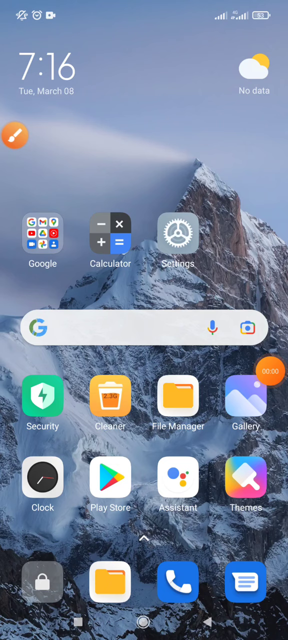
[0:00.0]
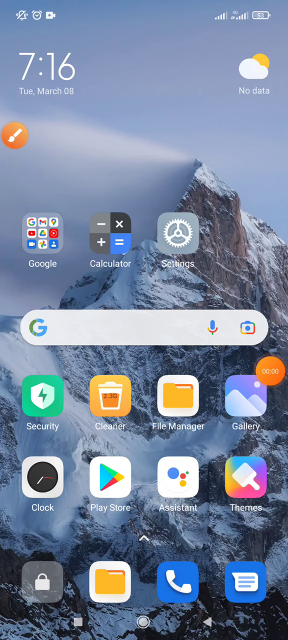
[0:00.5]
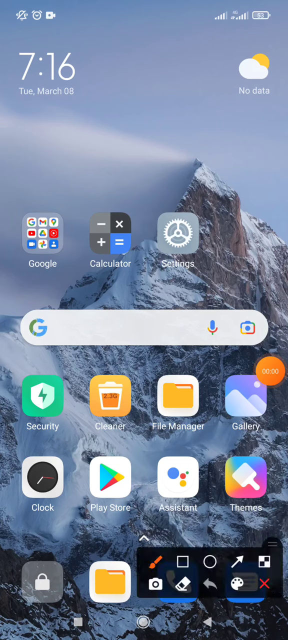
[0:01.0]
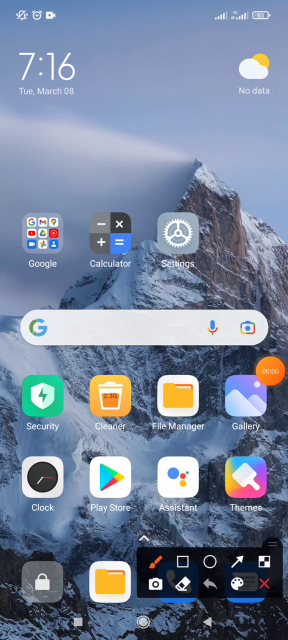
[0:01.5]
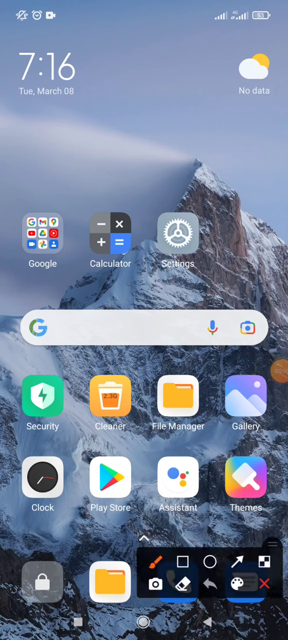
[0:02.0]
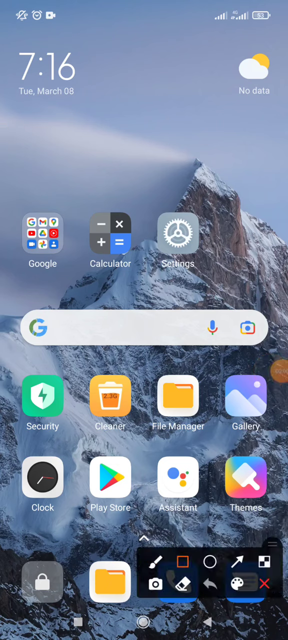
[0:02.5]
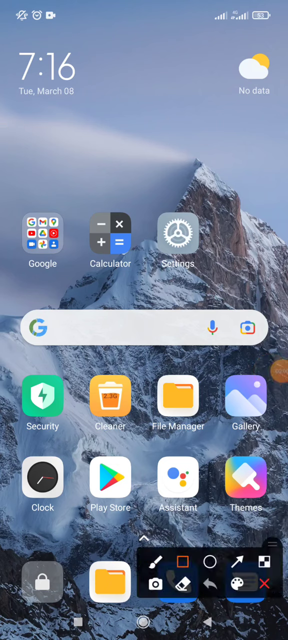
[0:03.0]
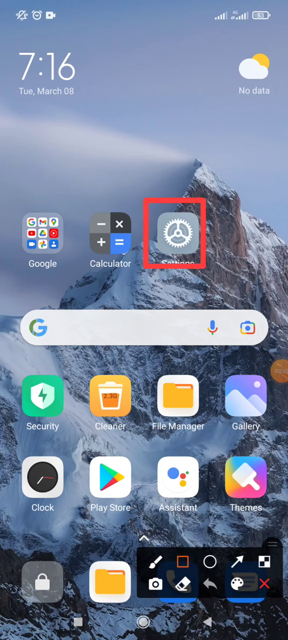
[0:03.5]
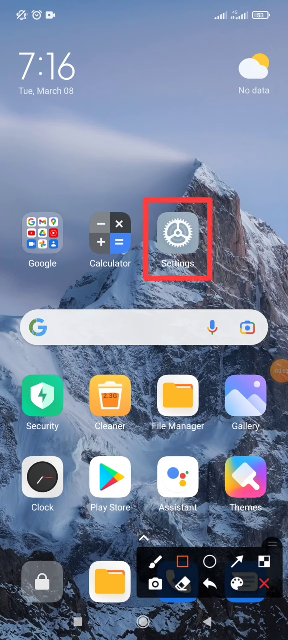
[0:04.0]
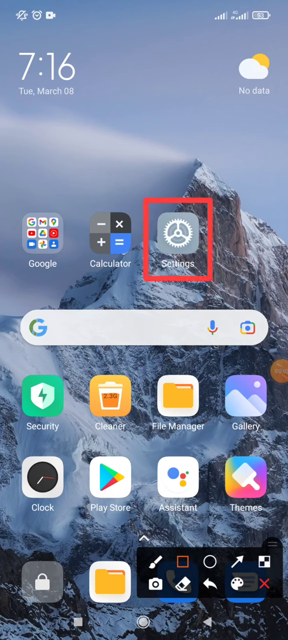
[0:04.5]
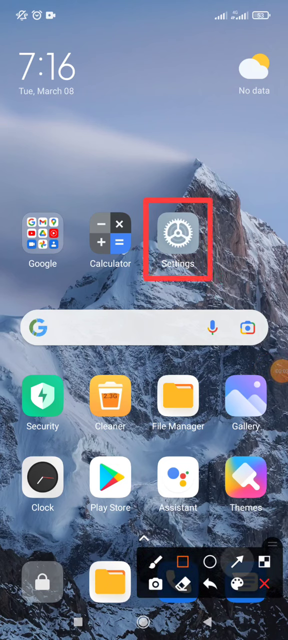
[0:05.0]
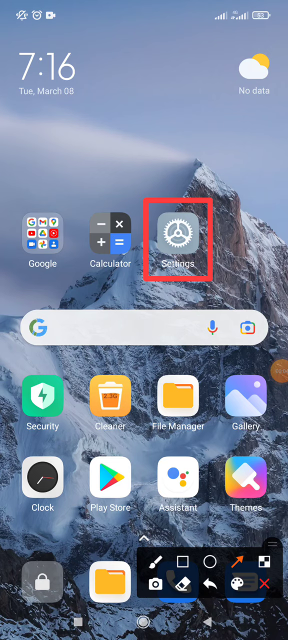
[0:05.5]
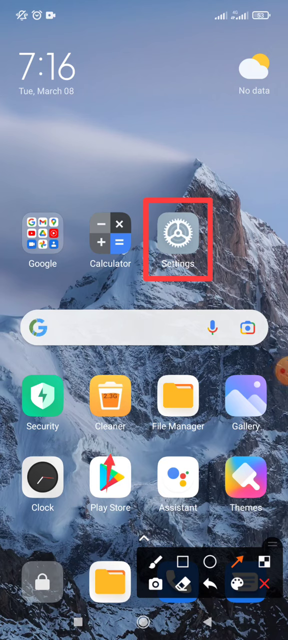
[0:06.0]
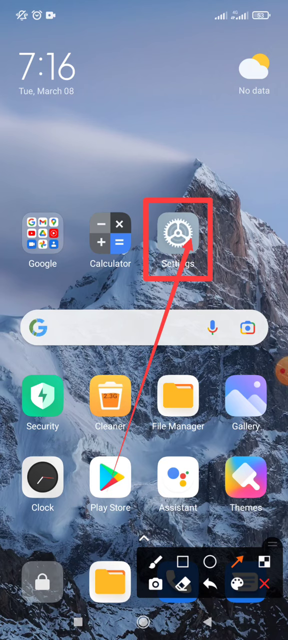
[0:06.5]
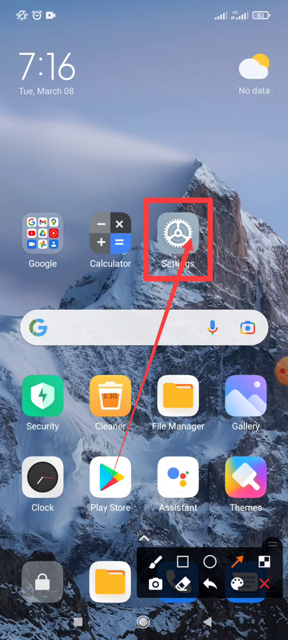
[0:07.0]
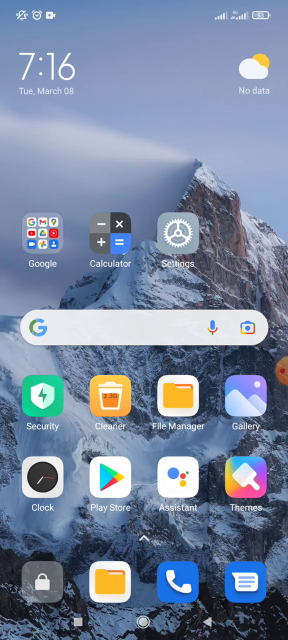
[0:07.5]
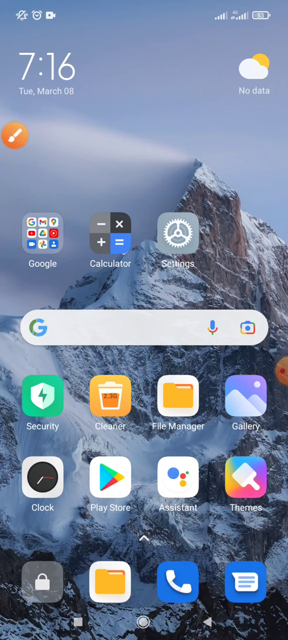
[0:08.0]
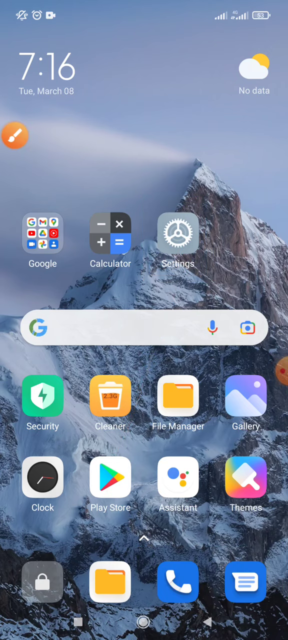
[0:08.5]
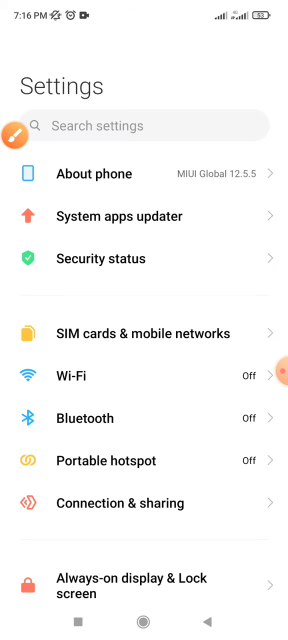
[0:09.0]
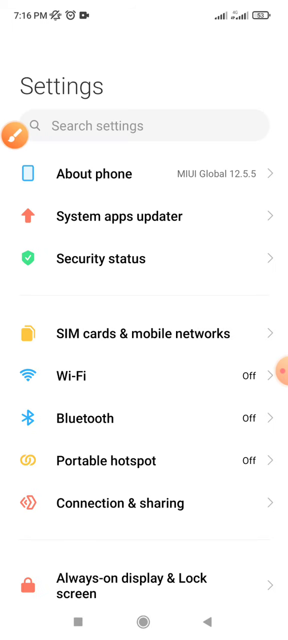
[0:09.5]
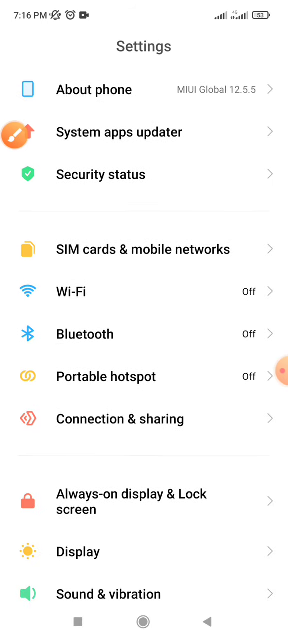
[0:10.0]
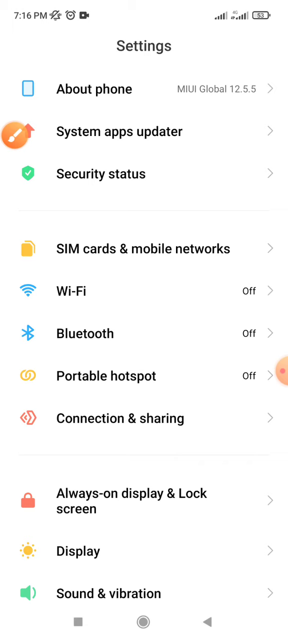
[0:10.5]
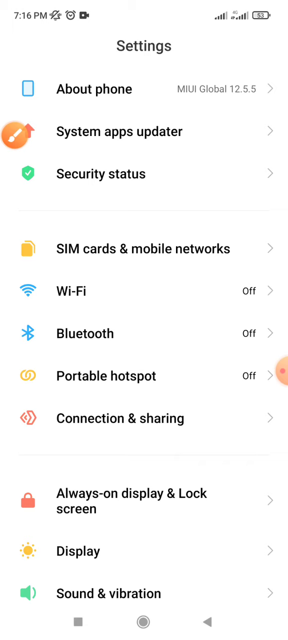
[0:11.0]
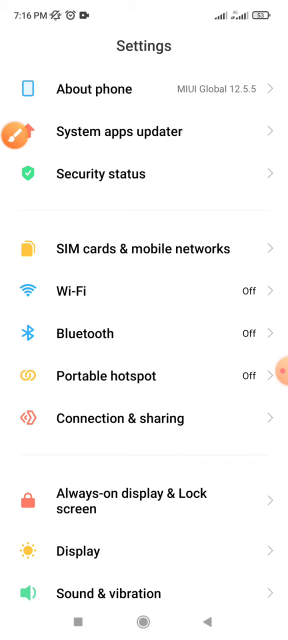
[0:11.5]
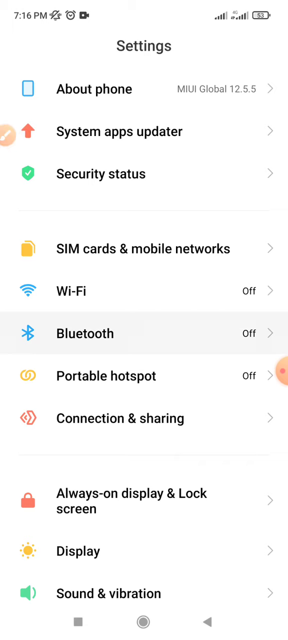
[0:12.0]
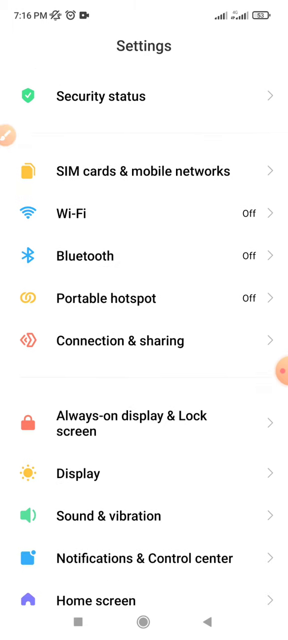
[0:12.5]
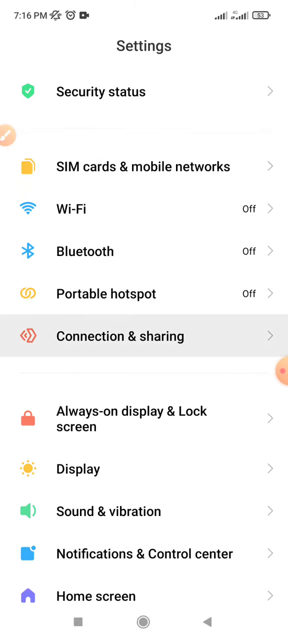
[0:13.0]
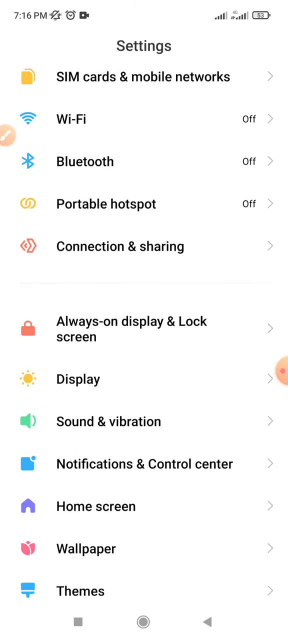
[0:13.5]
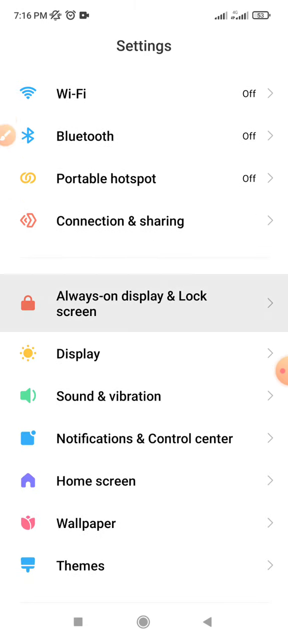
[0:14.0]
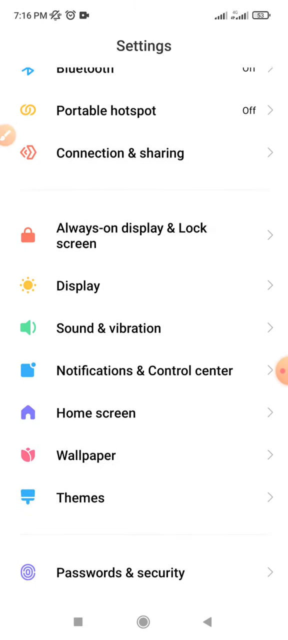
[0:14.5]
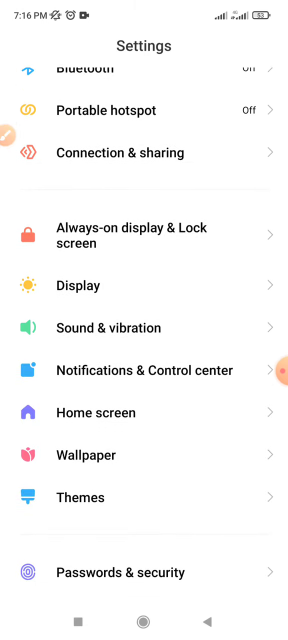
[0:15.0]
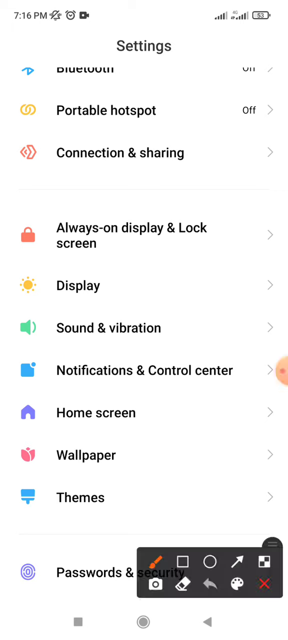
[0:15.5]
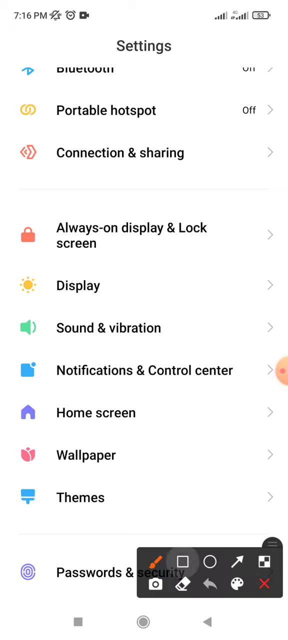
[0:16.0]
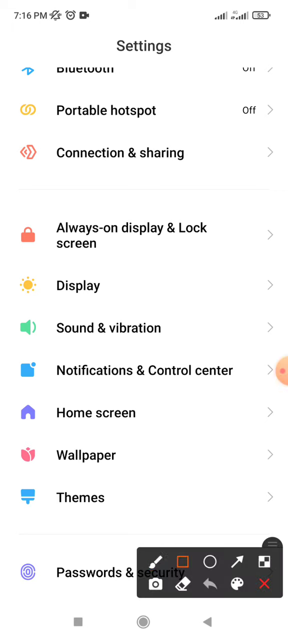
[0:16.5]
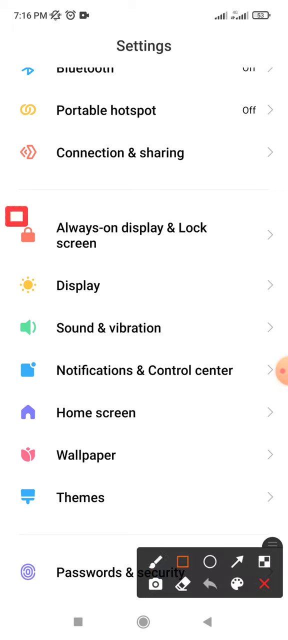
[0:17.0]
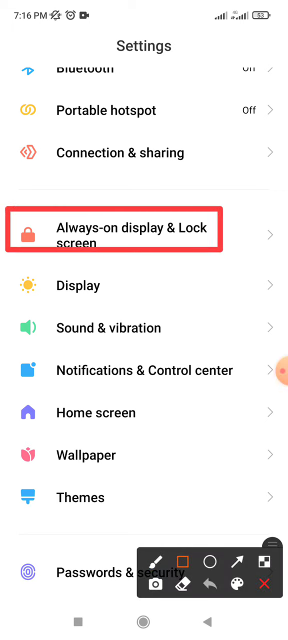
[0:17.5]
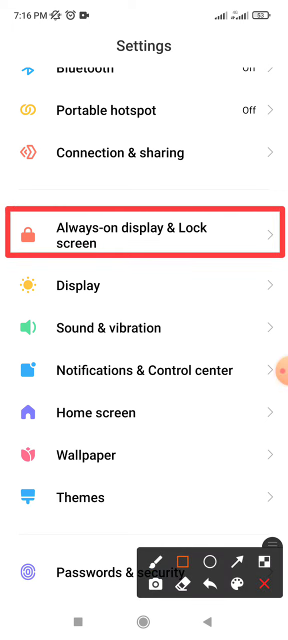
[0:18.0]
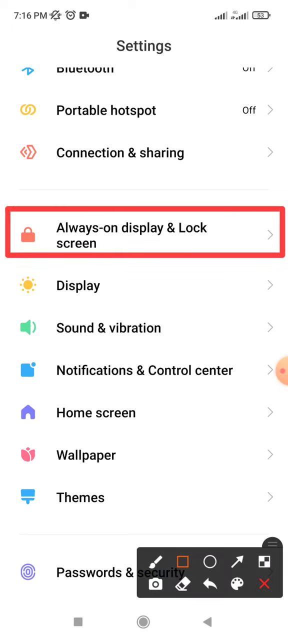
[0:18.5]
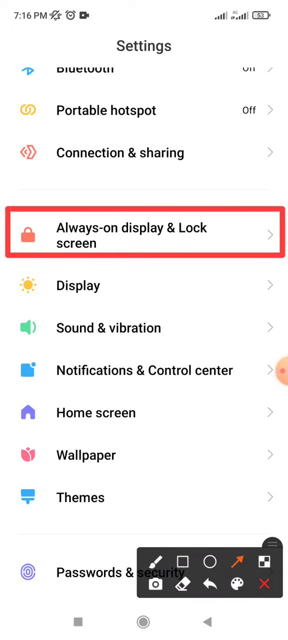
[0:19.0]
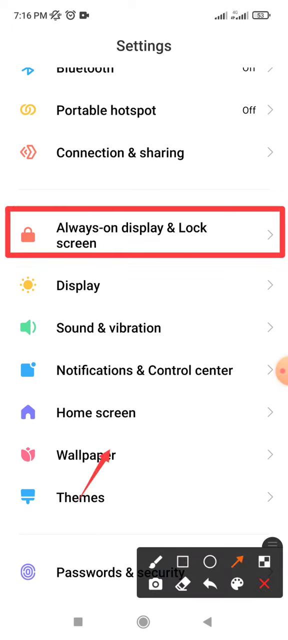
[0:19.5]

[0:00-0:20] The video shows a cell phone screen. It starts on the main screen, then moves to the settings screen, where the display and lock screen option is chosen. On the main screen, the wallpaper is a snow-covered mountain top, with what looks like some very thin clouds behind it. A number of applications appear on the screen, with 15 widgets in total. At the very top of the screen, the date and time are on the right side, and signal strength and battery life are on the left.